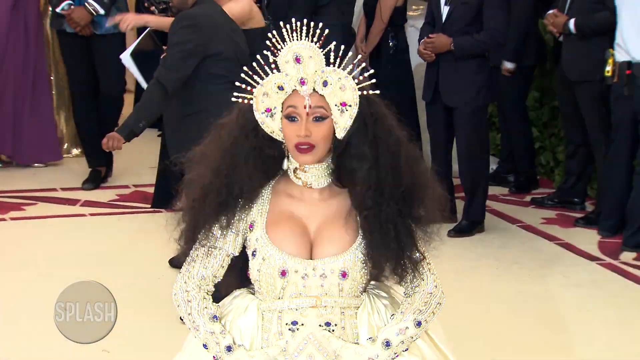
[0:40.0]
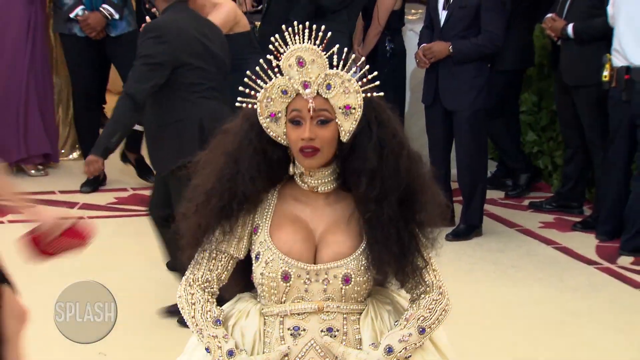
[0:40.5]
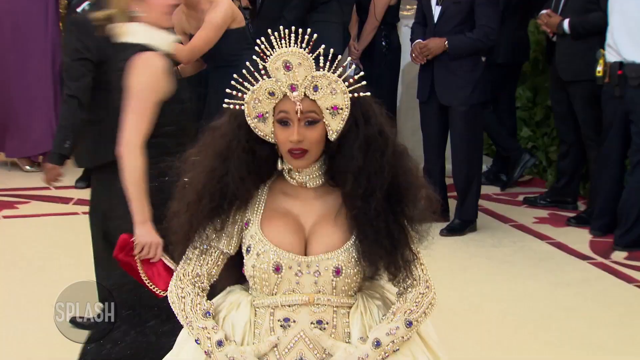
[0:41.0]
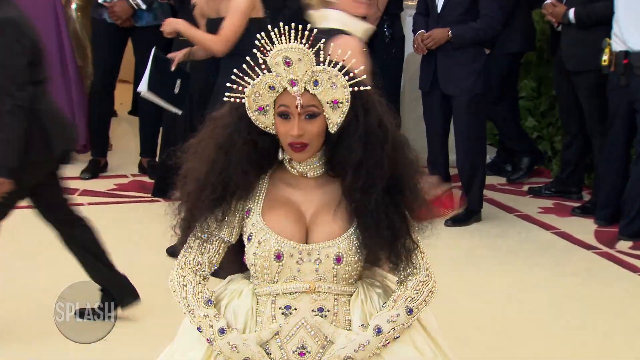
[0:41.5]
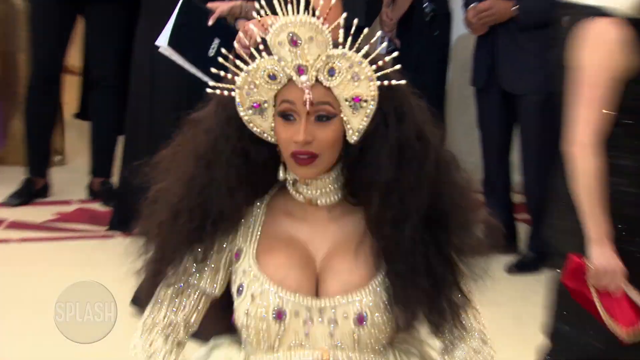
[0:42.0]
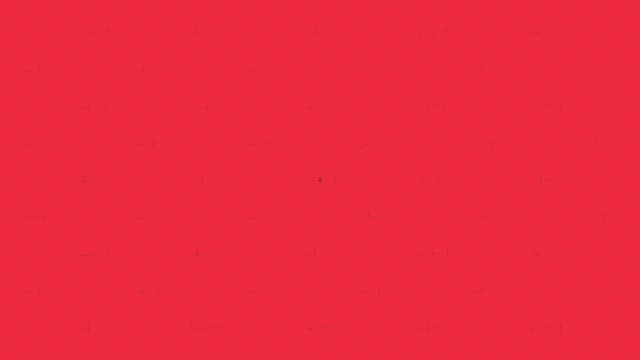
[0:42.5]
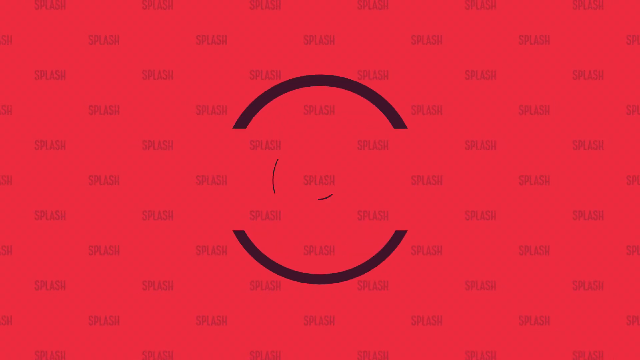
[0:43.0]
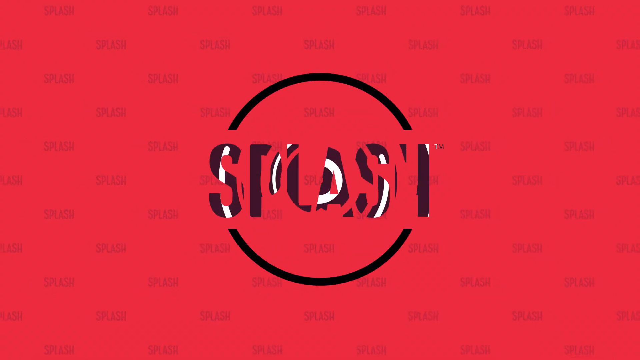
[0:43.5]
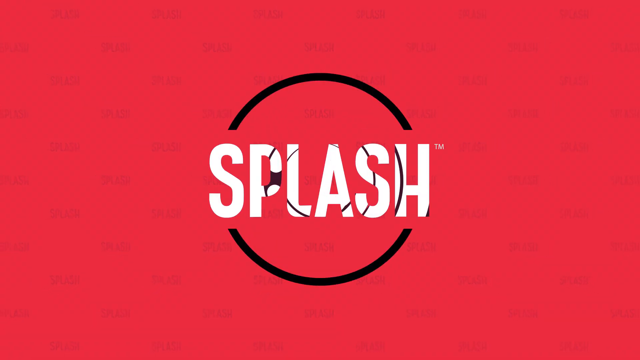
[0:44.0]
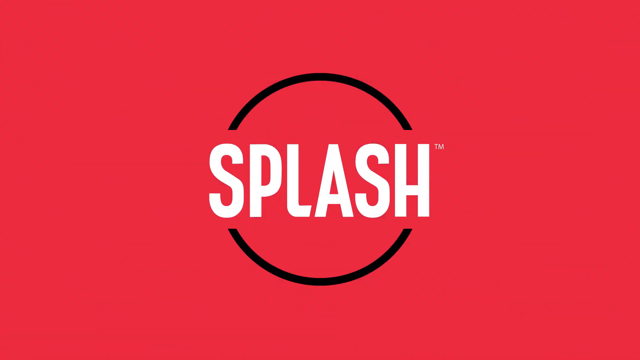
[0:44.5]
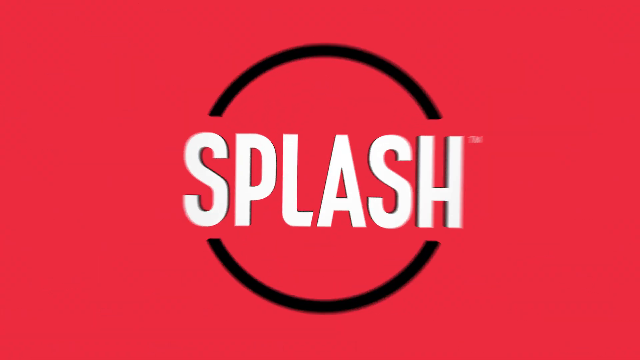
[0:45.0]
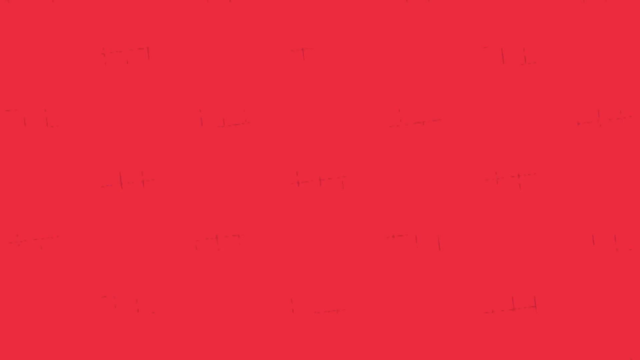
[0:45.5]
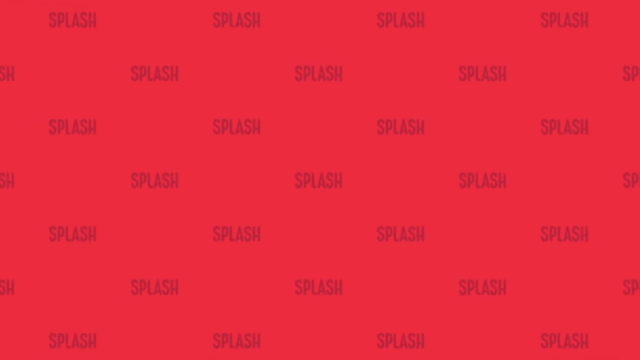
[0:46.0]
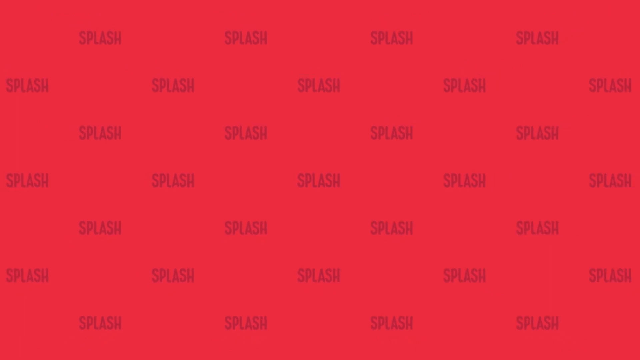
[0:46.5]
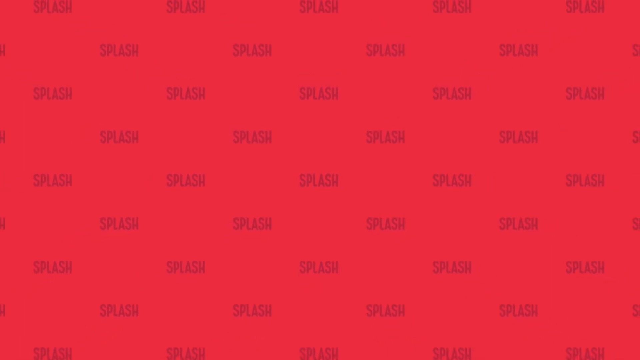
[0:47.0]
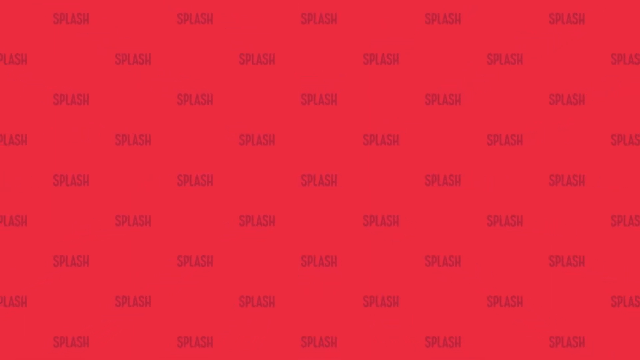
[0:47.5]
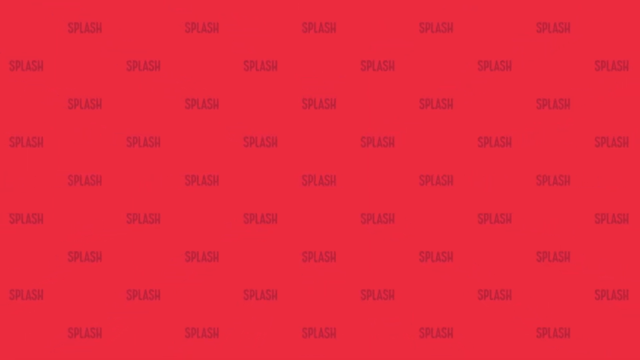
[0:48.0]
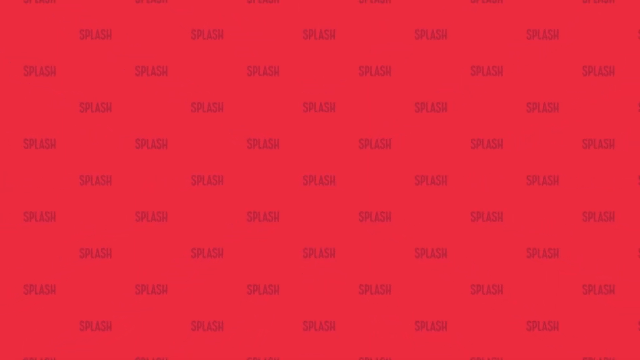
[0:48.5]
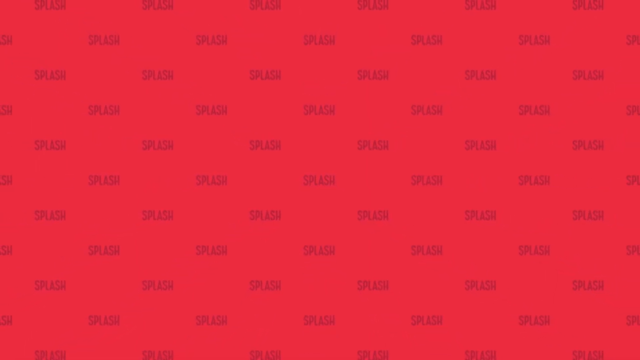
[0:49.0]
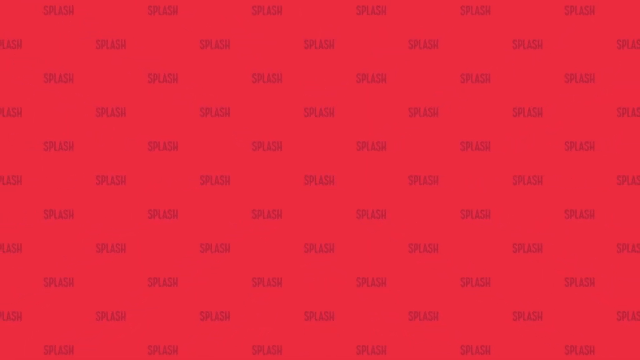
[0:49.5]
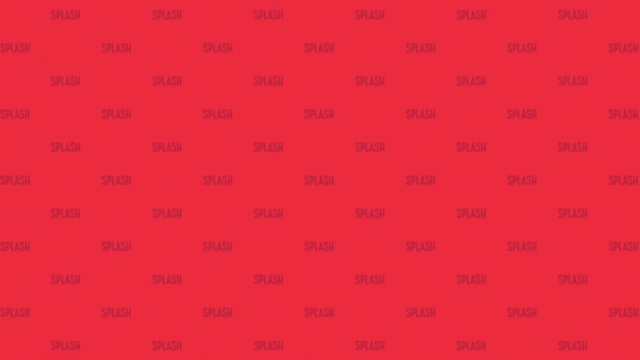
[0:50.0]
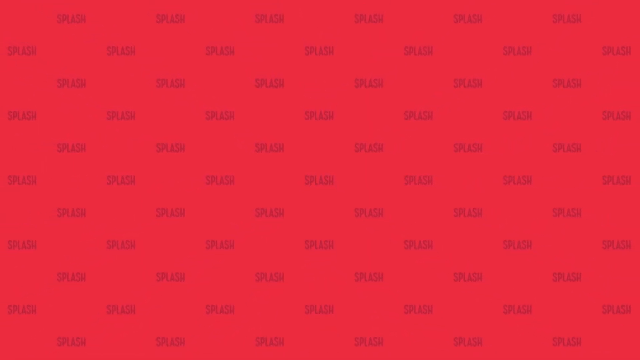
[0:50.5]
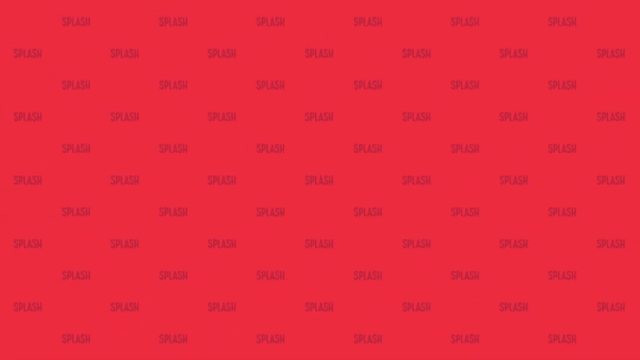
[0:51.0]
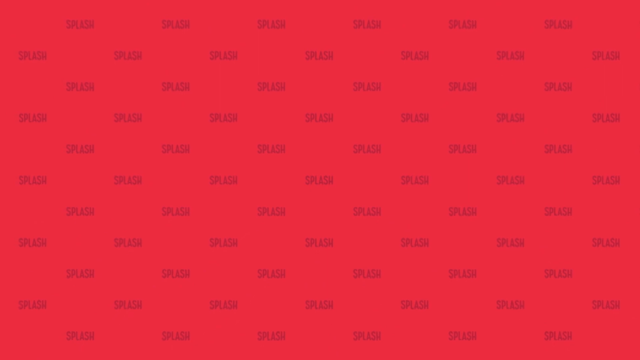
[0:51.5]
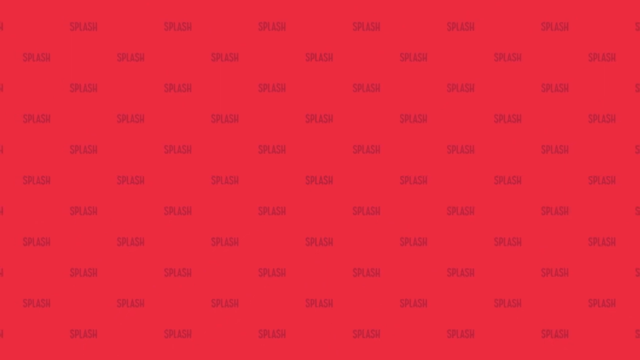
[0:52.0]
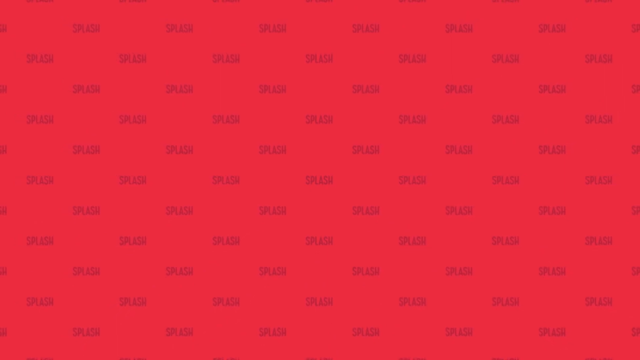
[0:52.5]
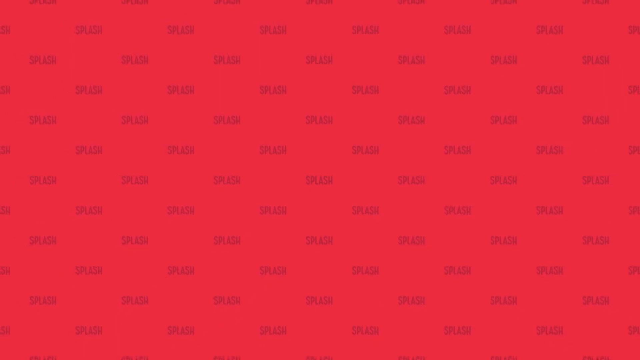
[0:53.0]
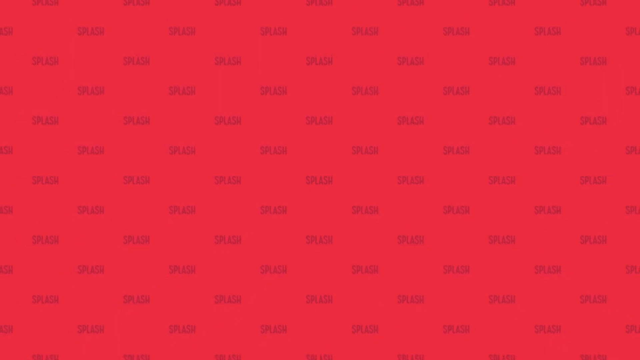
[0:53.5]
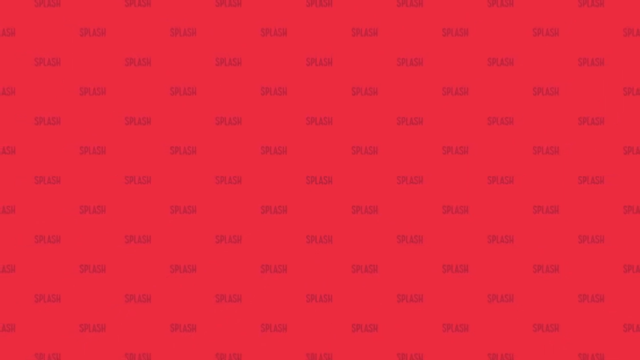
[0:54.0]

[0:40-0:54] Cardi B is shown at another event, wearing a cream dress and a crown on her head with spiky points at the top. Her dress has black and purple jewels, and she wears deep red lipstick. She seems to be wearing her natural long black hair. In the background are many people attending the event; the men wear suits and the women wear dresses. The visual then shifts to a red background with the word "SPLASH" in capital letters on a black circle. Next, a red background shows the word "SPLASH" repeated across it, and the camera seems to zoom out.